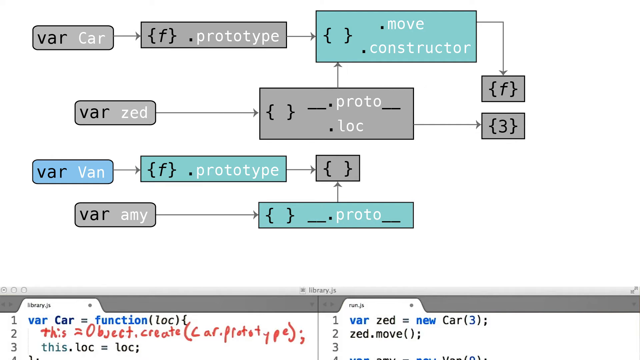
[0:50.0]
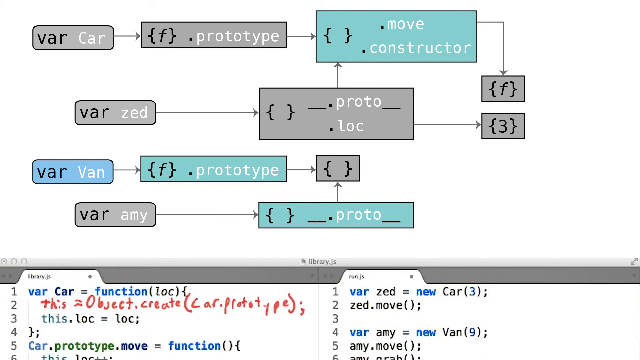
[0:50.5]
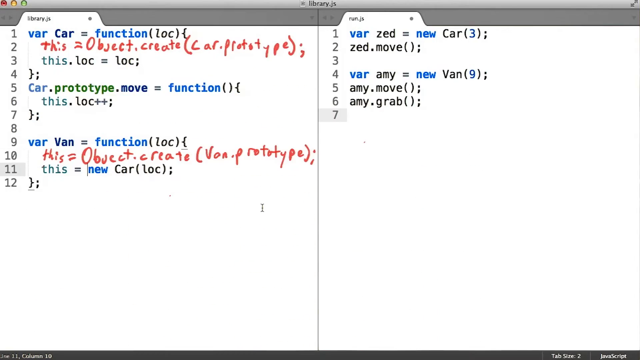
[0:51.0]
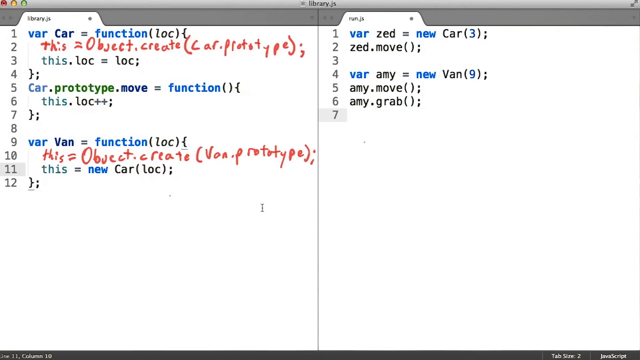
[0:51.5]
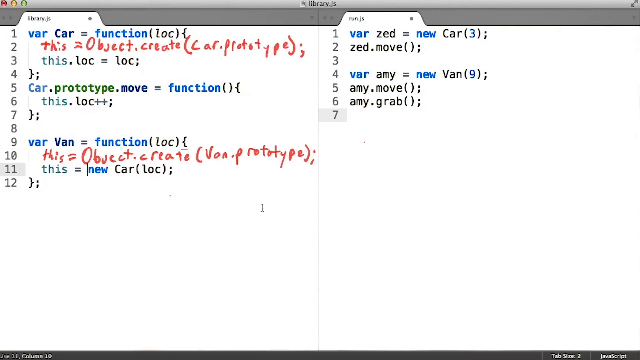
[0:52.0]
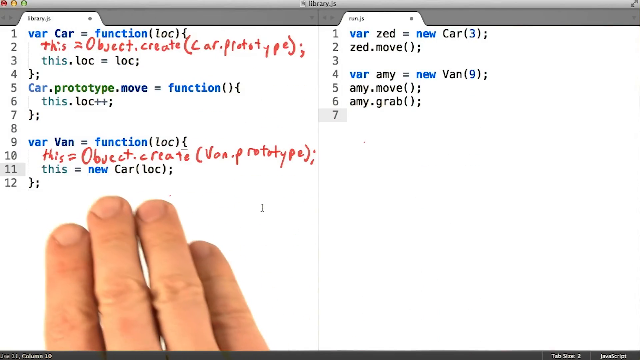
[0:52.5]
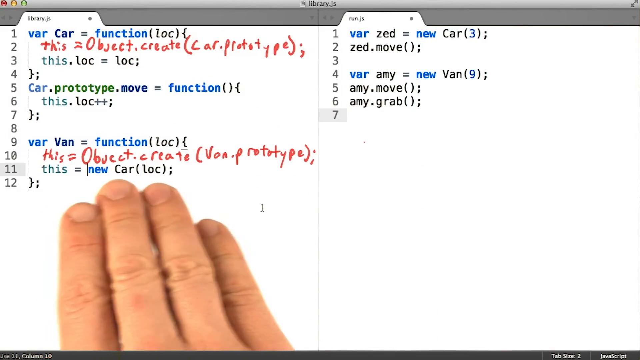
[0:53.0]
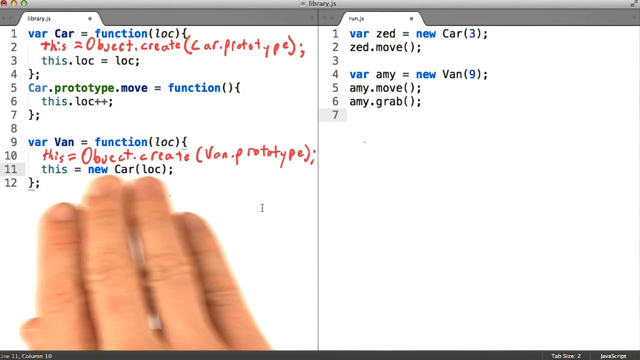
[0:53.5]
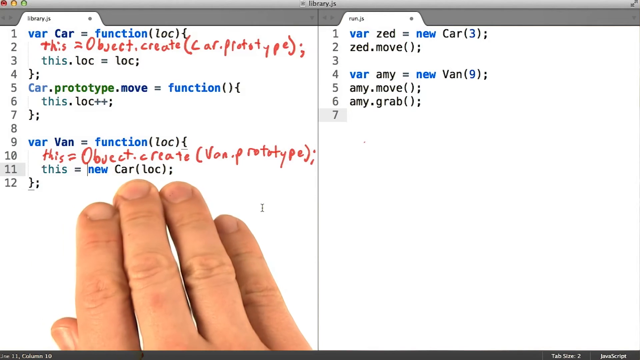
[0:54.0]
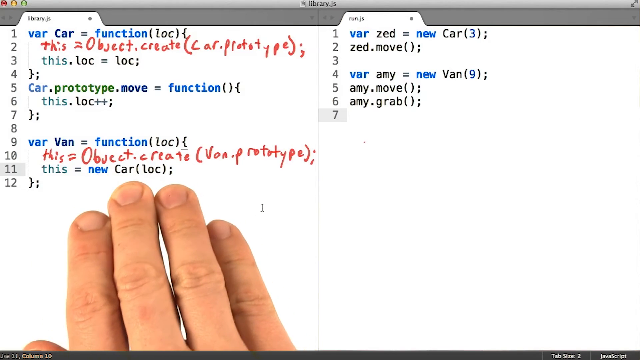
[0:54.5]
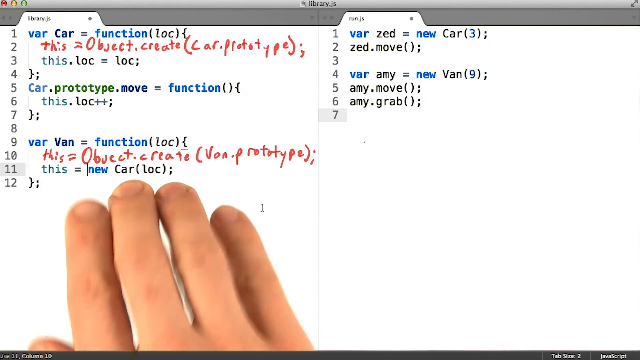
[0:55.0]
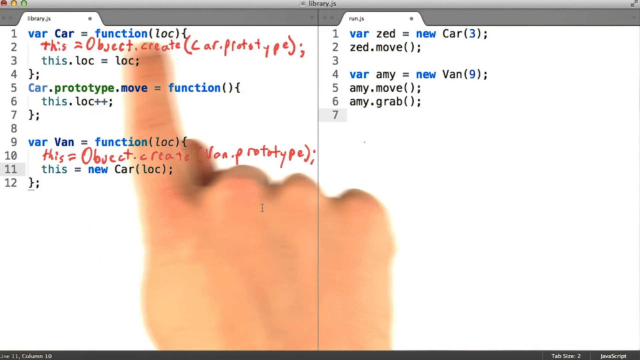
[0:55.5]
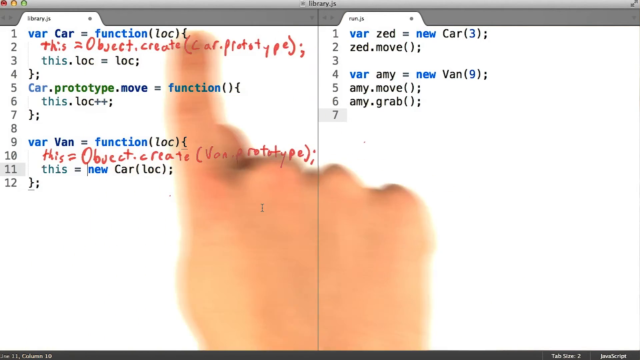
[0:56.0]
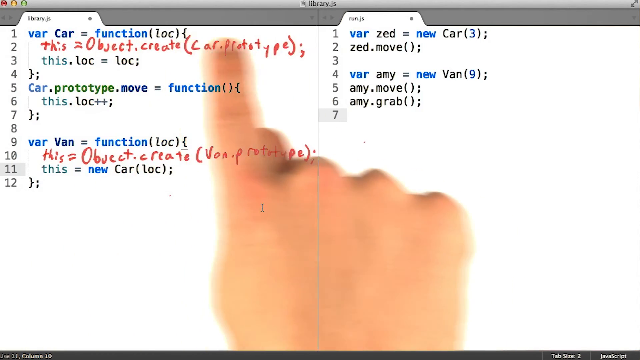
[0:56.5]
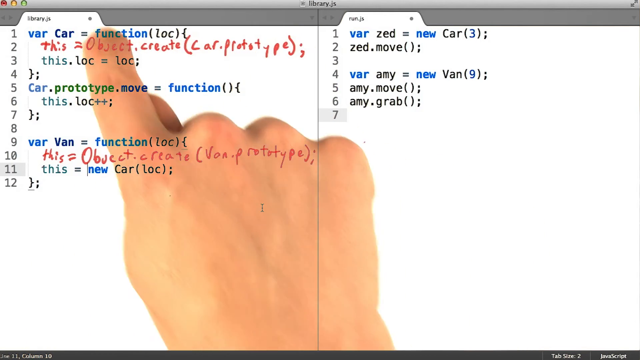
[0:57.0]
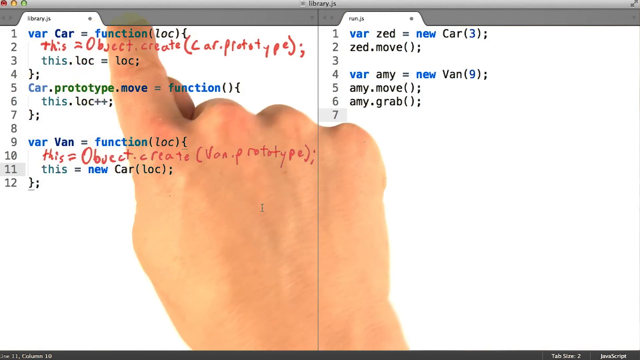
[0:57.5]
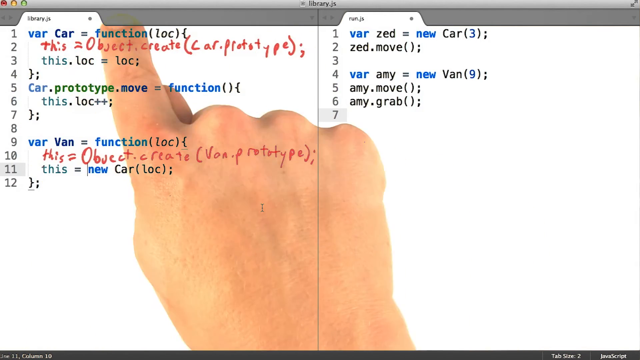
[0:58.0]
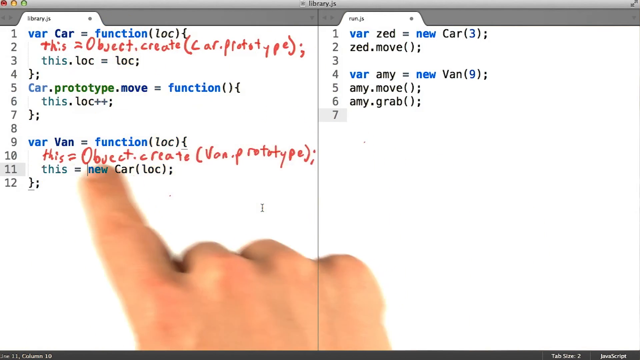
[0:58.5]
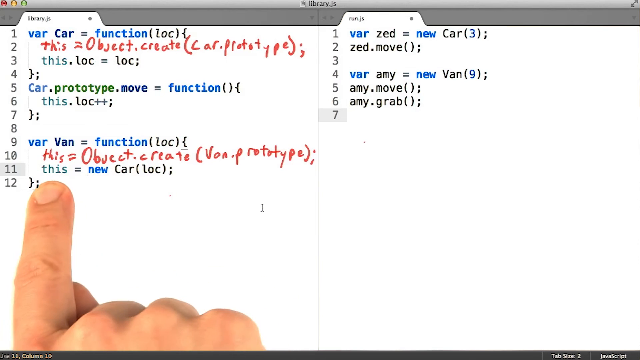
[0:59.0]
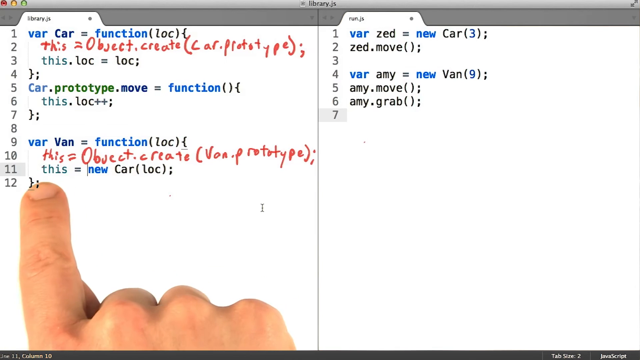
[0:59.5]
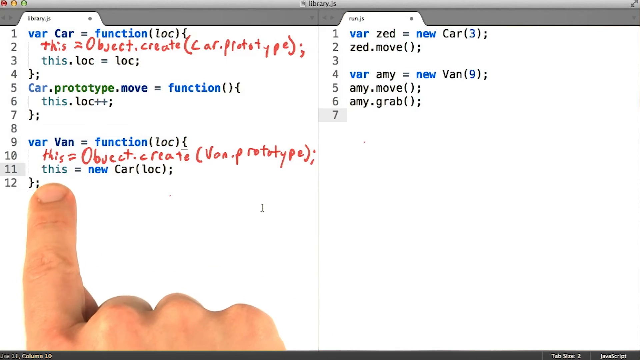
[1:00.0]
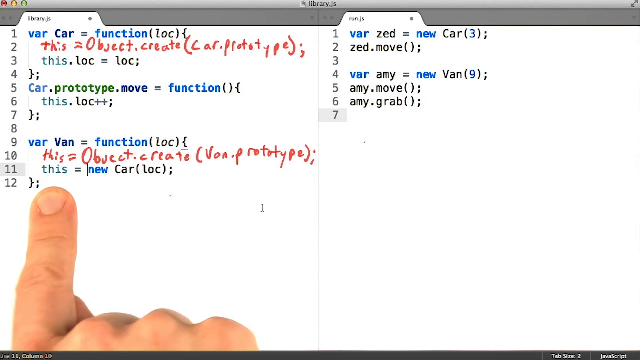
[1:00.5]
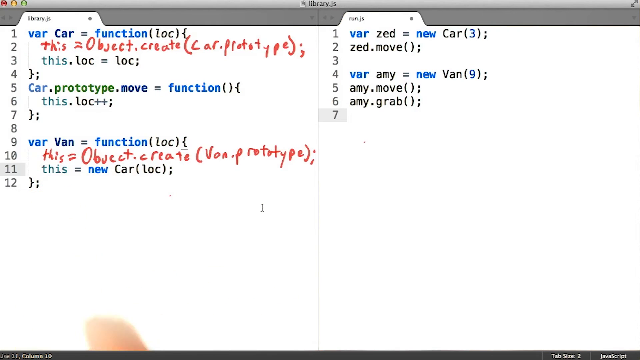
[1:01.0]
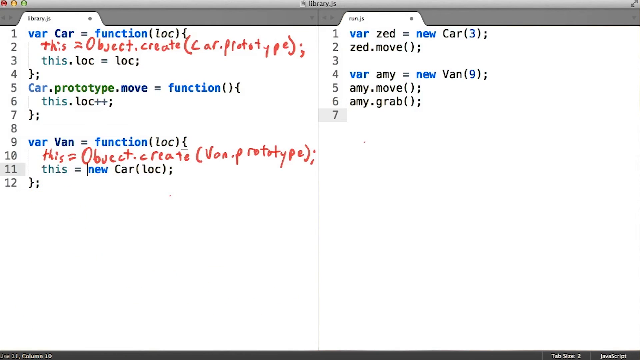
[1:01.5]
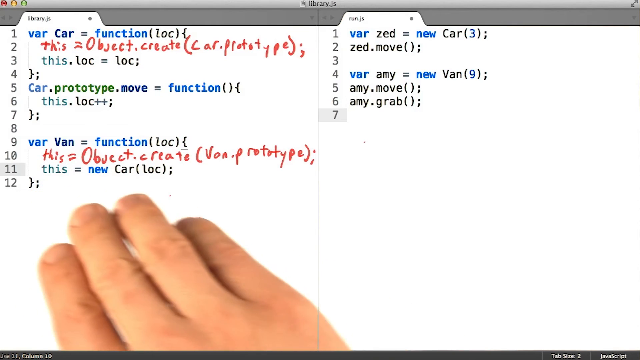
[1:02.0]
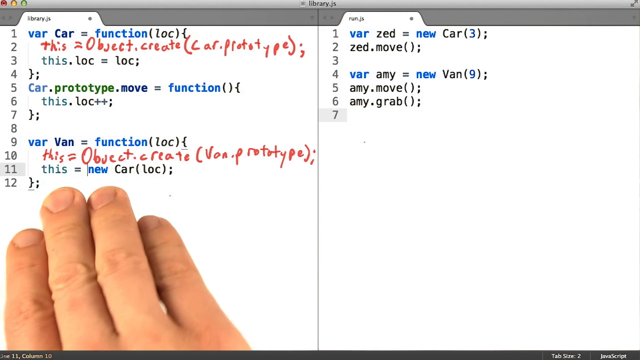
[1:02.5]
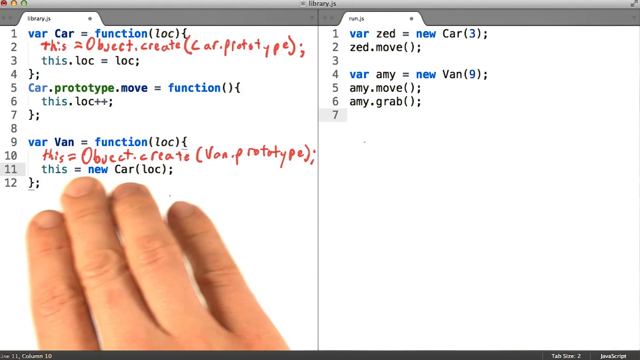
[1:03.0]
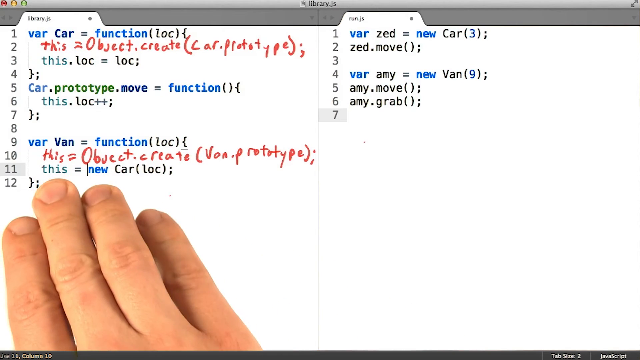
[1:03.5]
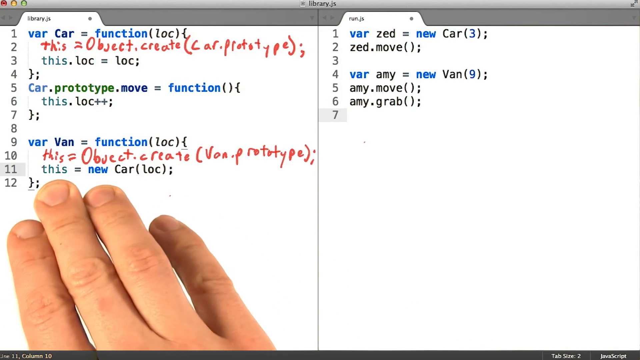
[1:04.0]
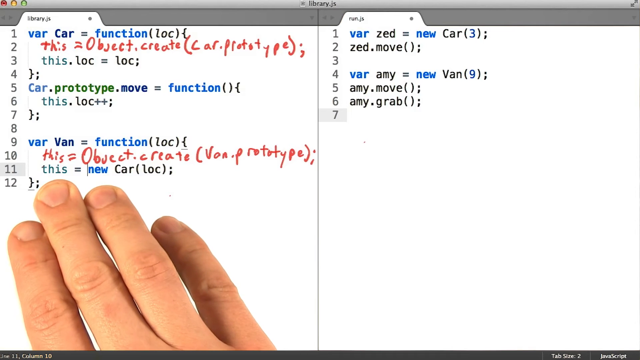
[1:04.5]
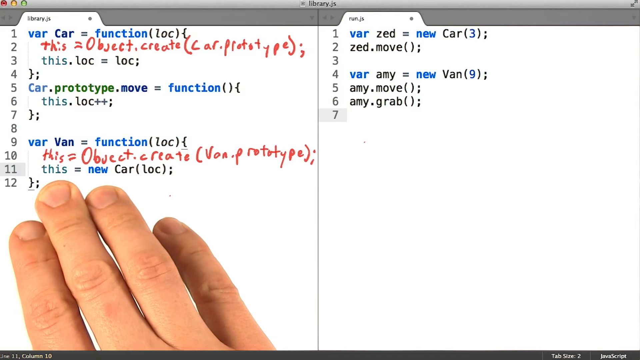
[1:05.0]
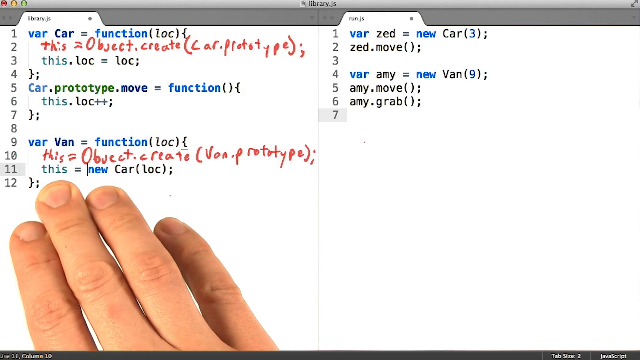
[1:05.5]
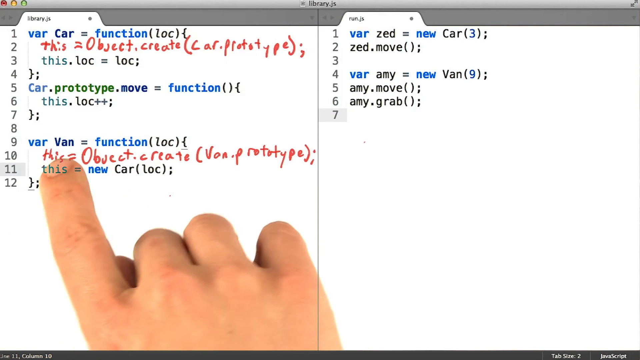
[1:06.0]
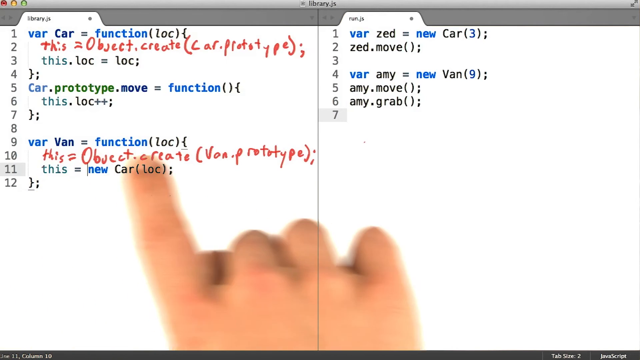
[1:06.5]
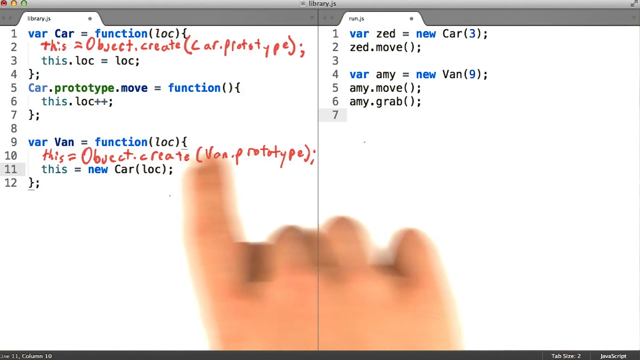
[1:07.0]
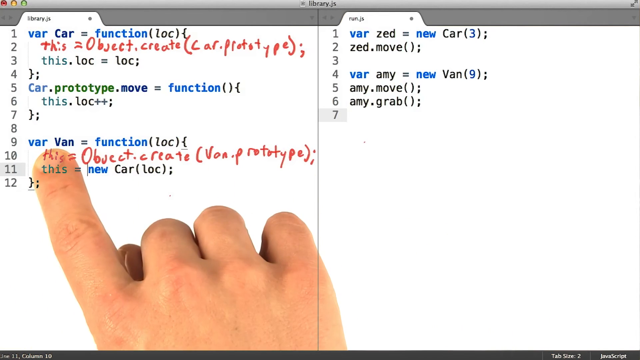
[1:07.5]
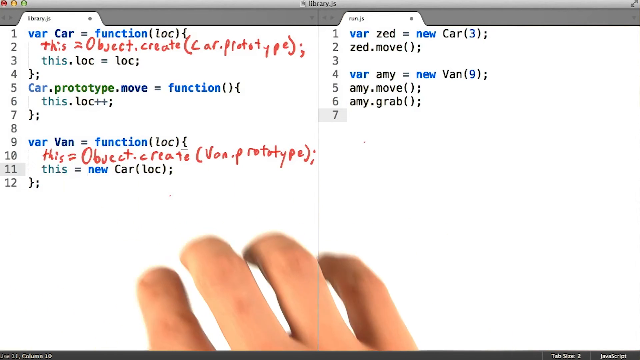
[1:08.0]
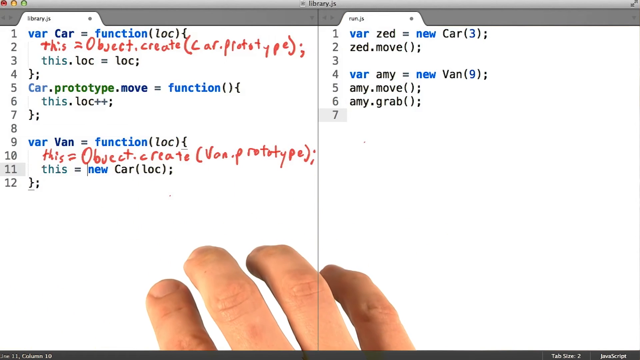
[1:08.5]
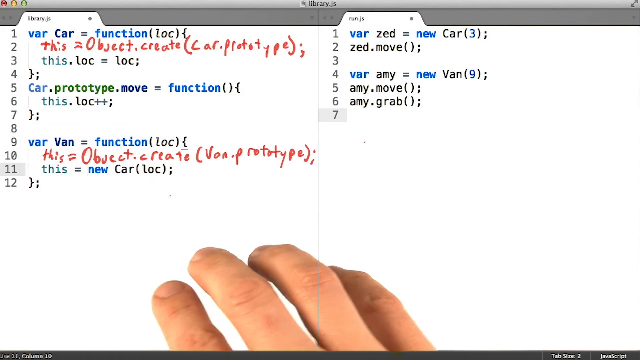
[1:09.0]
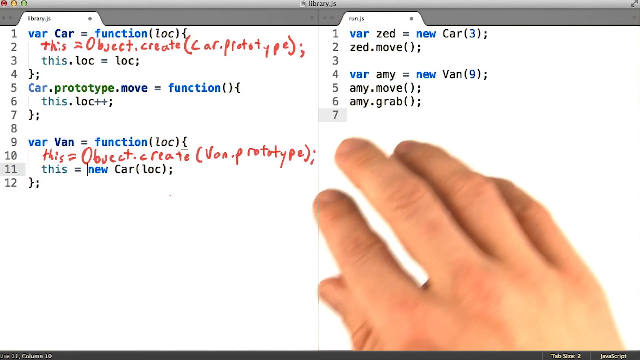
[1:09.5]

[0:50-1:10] The flowchart gives way to the split screen with the lines of code: 12 lines on the left-hand side and seven lines available on the right-hand side. The lines contain the same information that was in the flowchart. Line one on the left-hand side says "VAR car equals function location", and line nine on the left-hand side says "VAR van equals function location". The right-hand side says "VAR ZED equals new car". The right hand gestures from left to right, showing how these lines of code correspond or connect to the lines of code on the right-hand side.